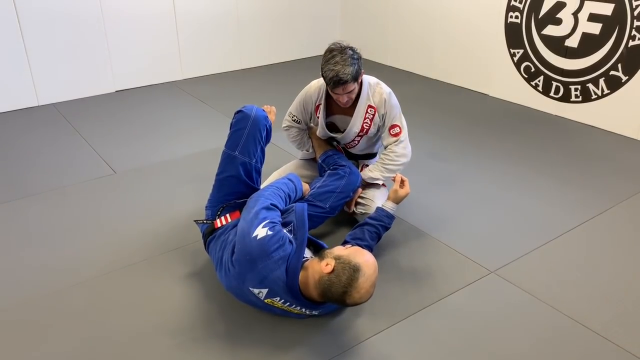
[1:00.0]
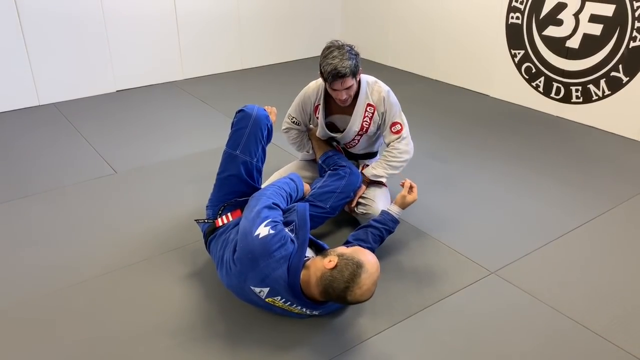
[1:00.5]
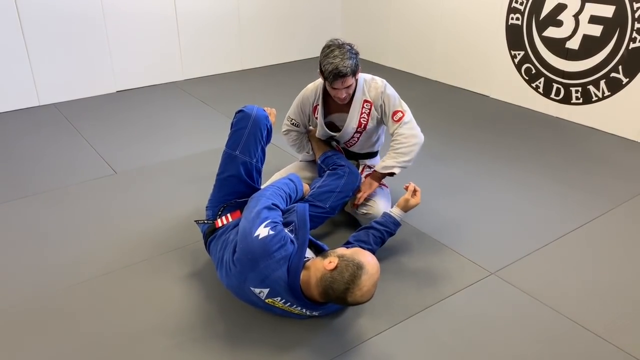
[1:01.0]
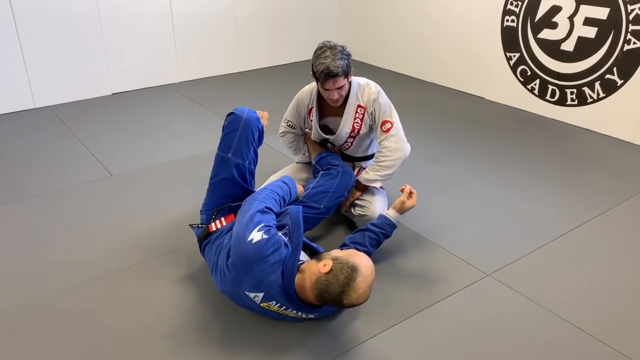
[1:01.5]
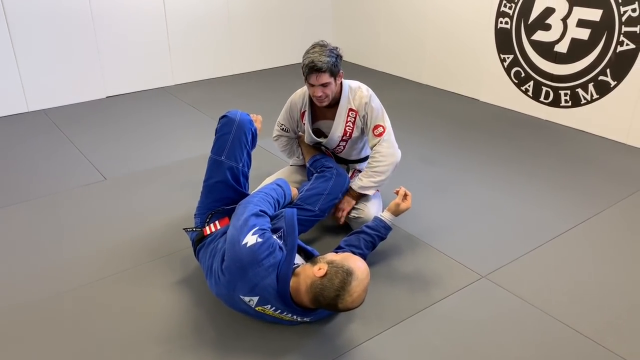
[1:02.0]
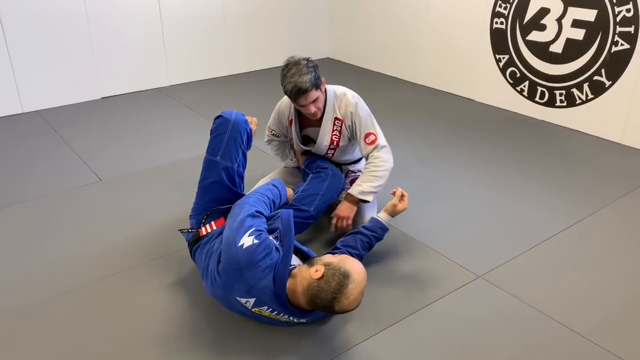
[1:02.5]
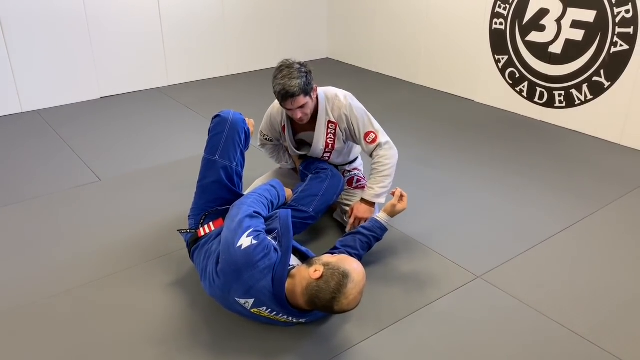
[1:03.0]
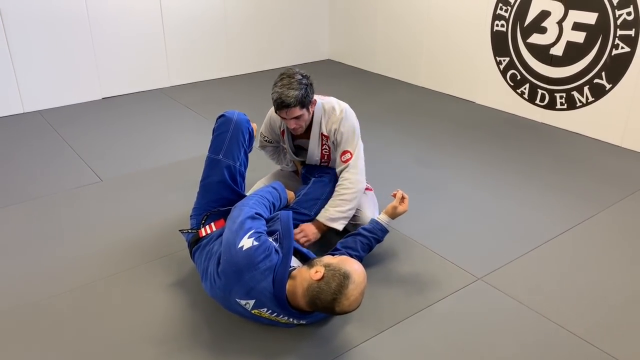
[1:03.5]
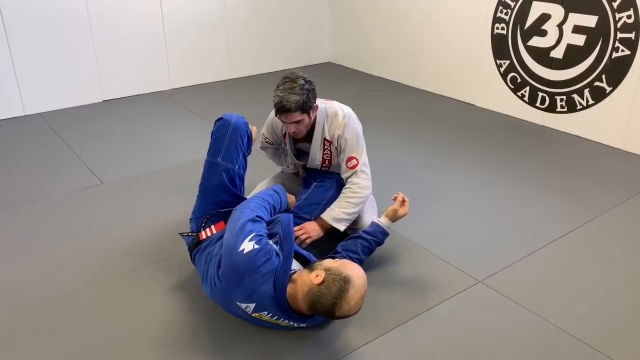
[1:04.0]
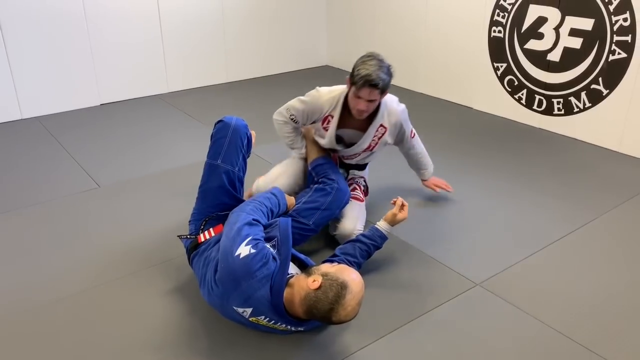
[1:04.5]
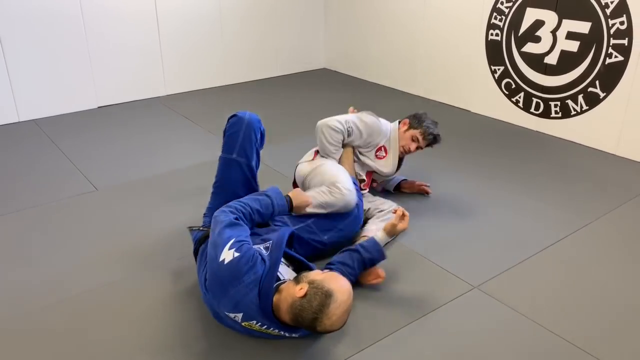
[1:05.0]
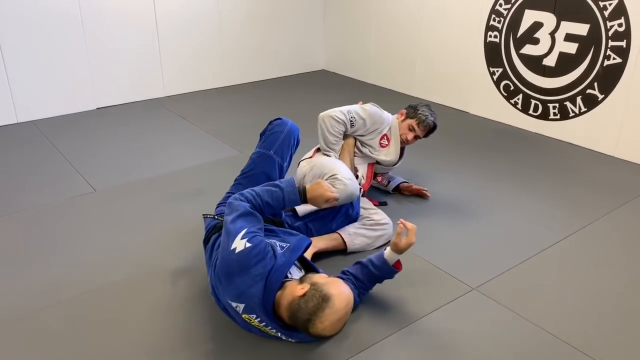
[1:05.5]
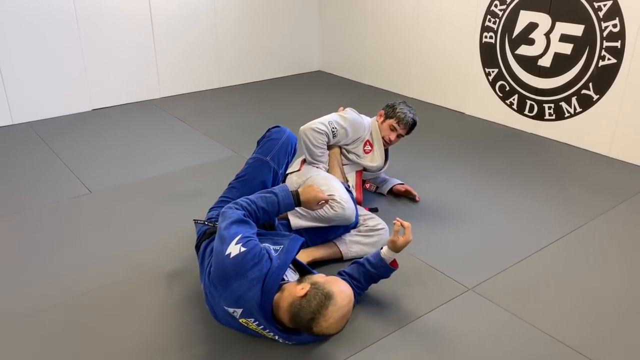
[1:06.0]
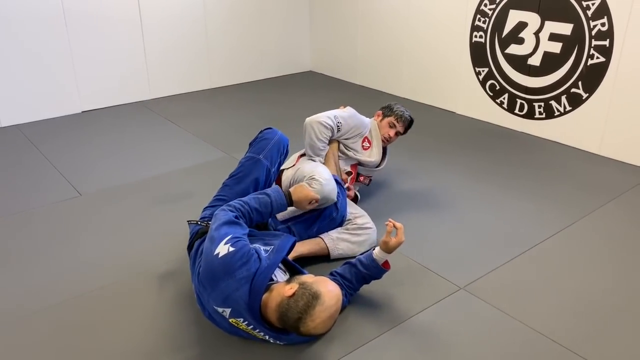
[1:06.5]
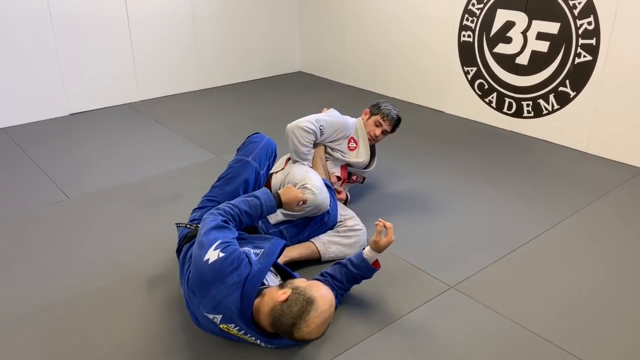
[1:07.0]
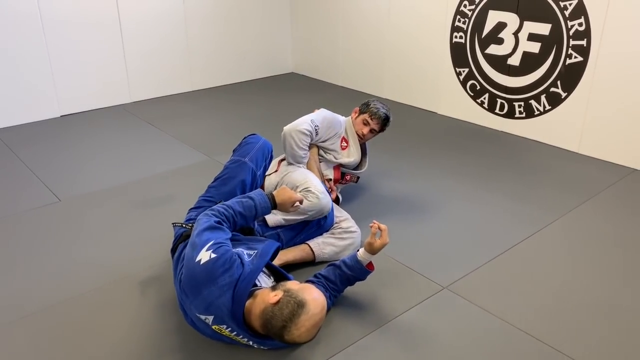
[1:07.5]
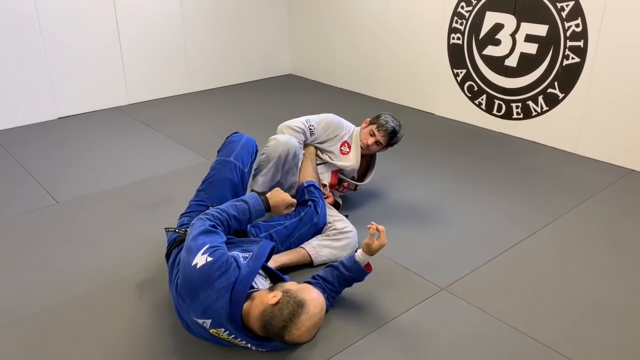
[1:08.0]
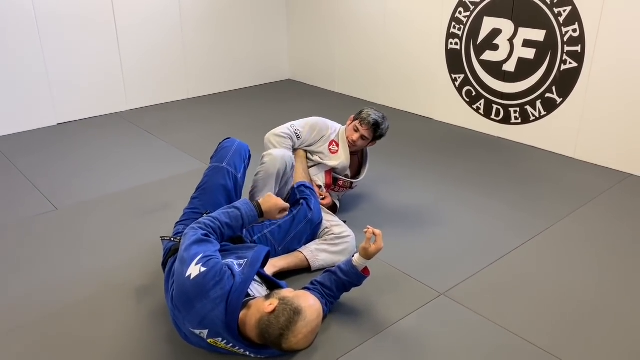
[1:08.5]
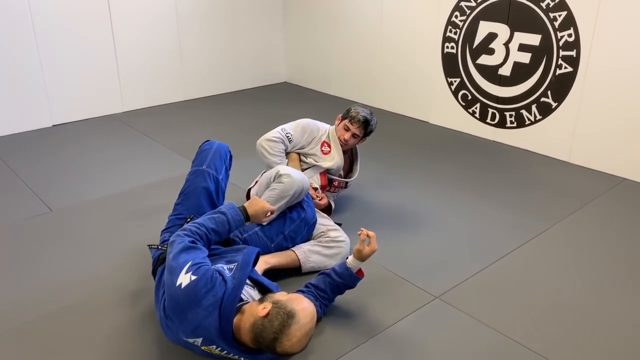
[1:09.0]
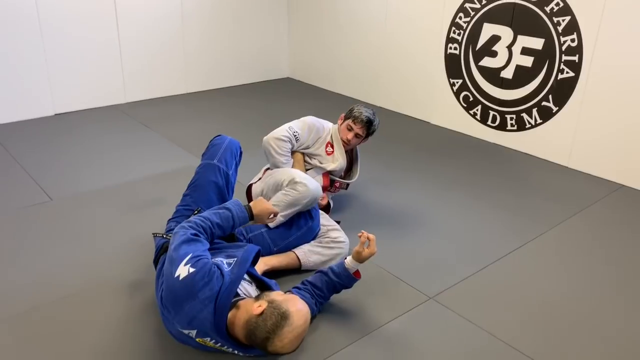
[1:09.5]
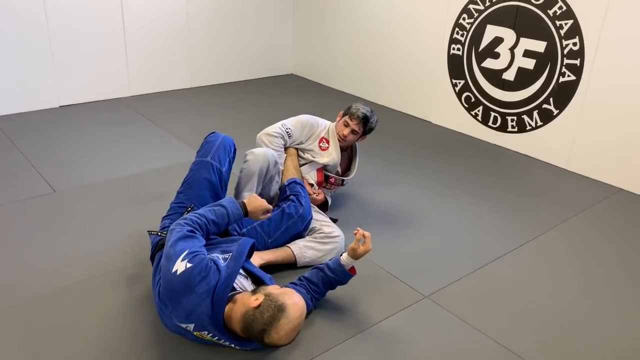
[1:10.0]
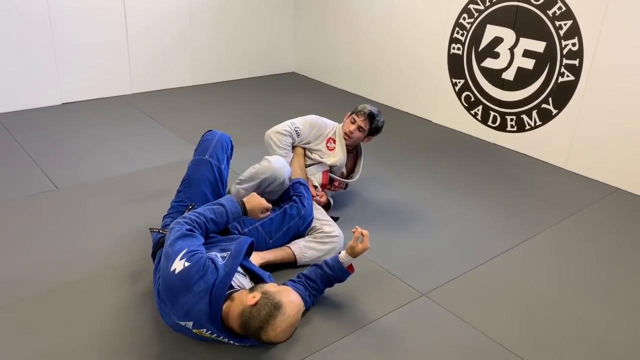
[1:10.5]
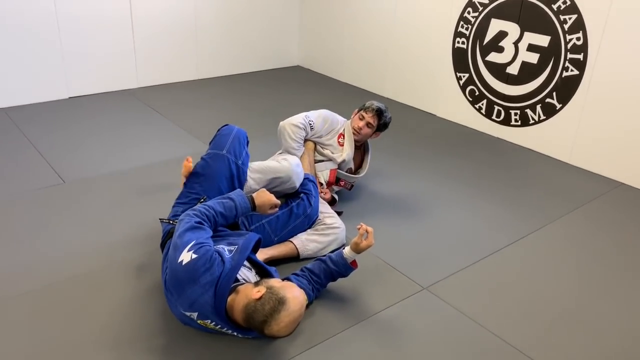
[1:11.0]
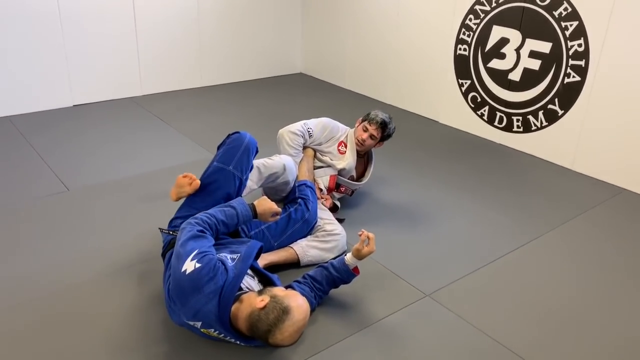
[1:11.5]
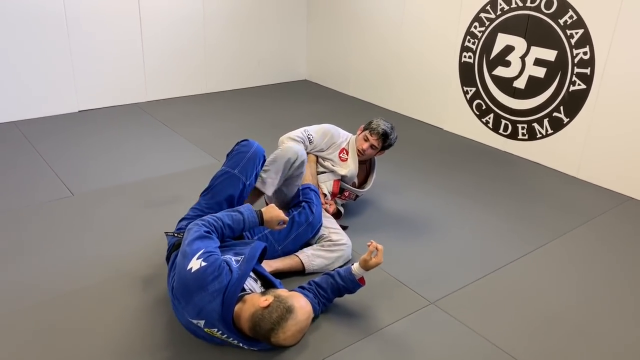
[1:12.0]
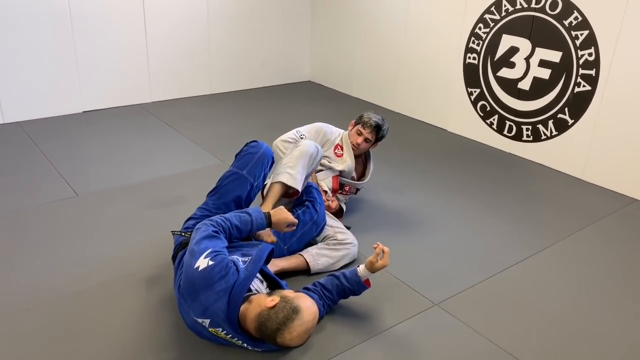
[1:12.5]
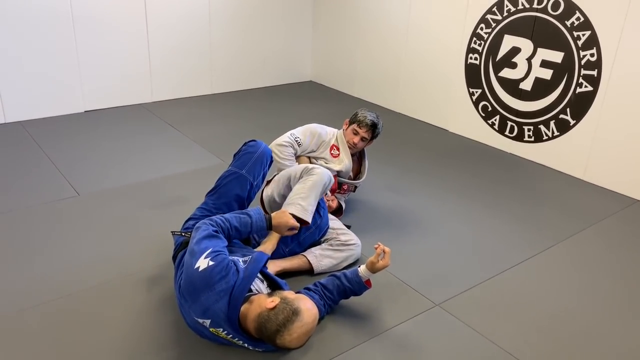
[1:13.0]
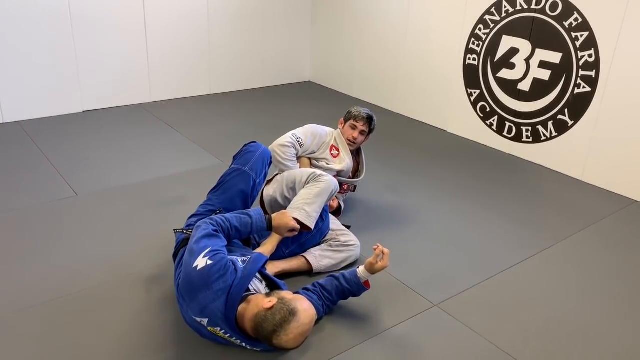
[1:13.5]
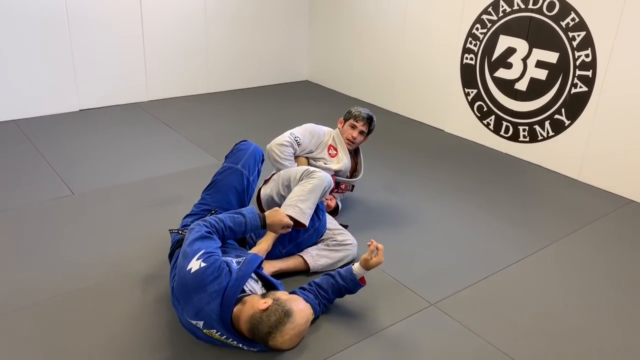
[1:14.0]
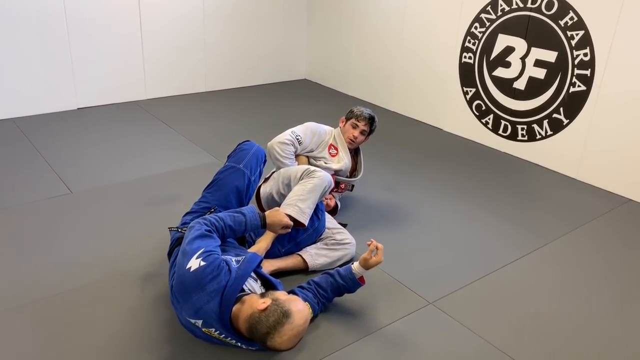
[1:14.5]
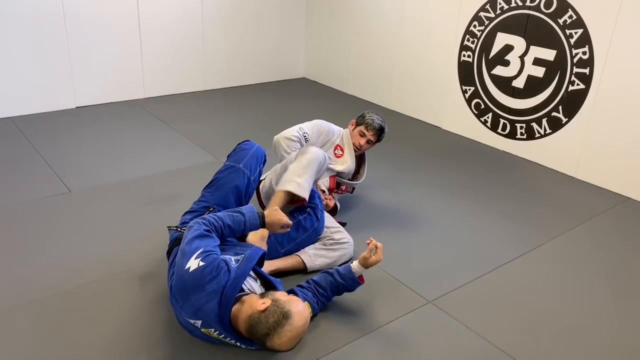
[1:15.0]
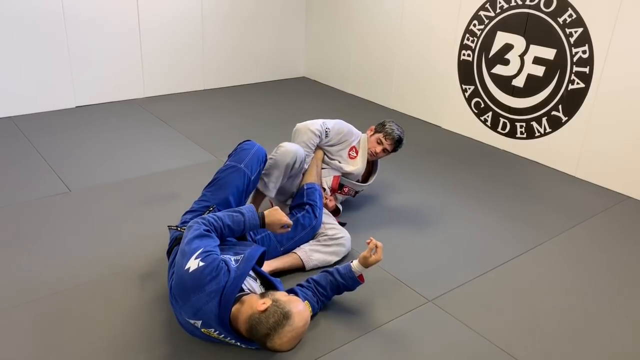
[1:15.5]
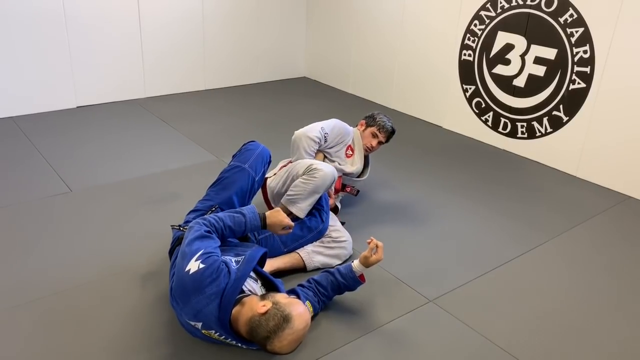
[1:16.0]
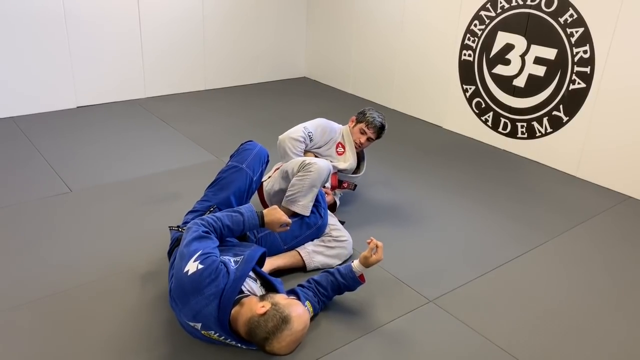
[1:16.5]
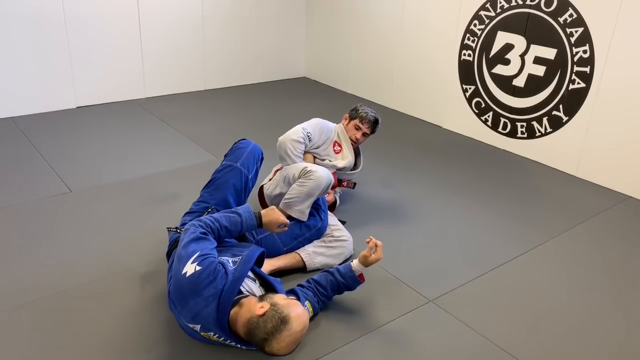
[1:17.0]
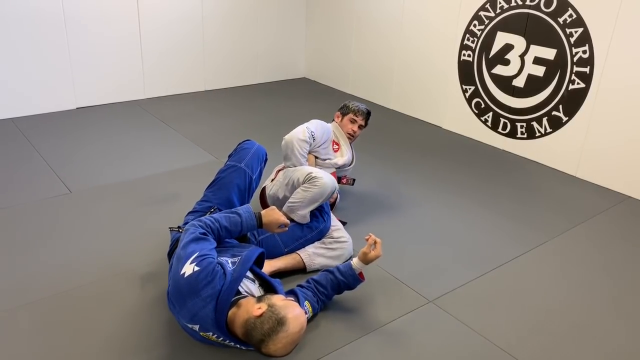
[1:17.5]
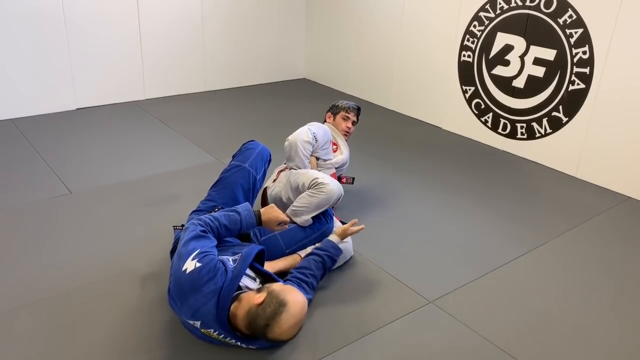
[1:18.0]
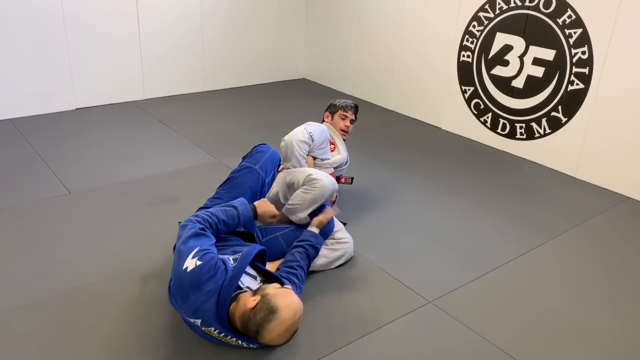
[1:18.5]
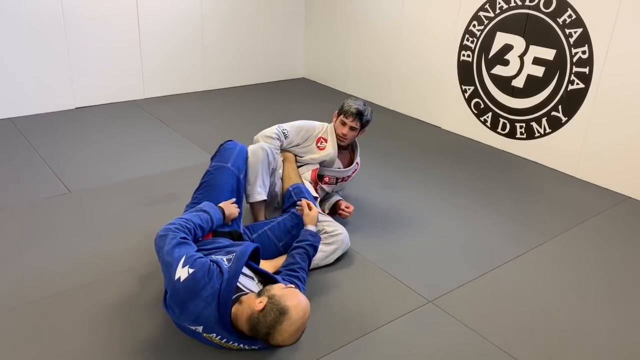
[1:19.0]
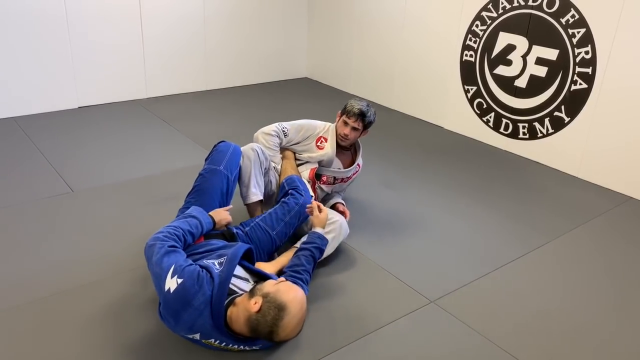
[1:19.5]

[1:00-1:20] The man in the blue uniform is kind of still on his back, turned toward the right side and leaning over. The other man eventually jumps back to the left side, leaning on his left arm and resting on his elbow, with the arm bent at a 90-degree angle. As he jumps back, he bends his legs so each makes an acute angle, with the leg of the man in blue still between his legs. The man in white then shows how the right leg can be manipulated, putting it under the other calf and putting pressure on it.